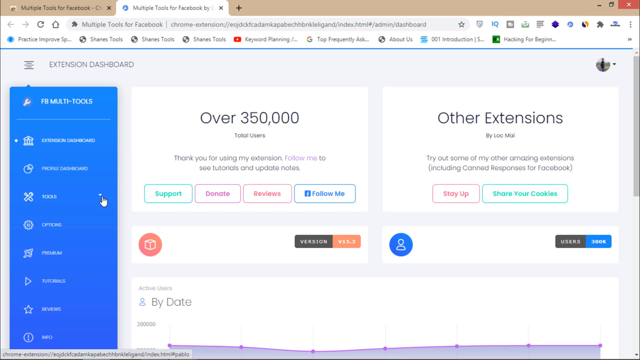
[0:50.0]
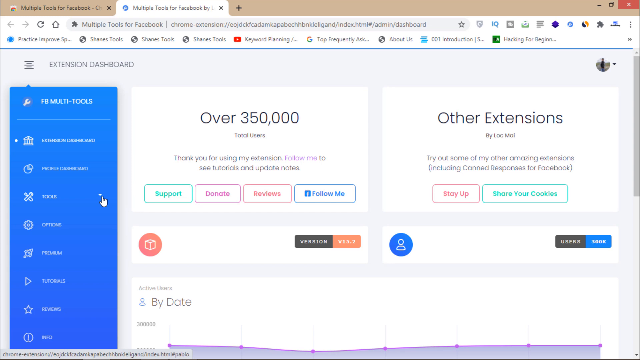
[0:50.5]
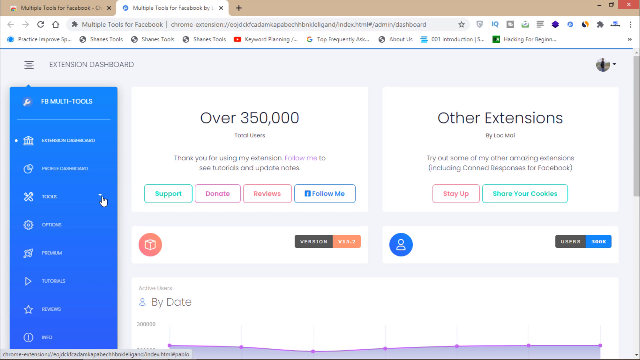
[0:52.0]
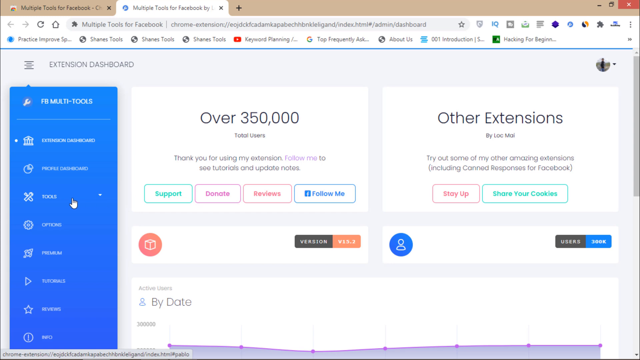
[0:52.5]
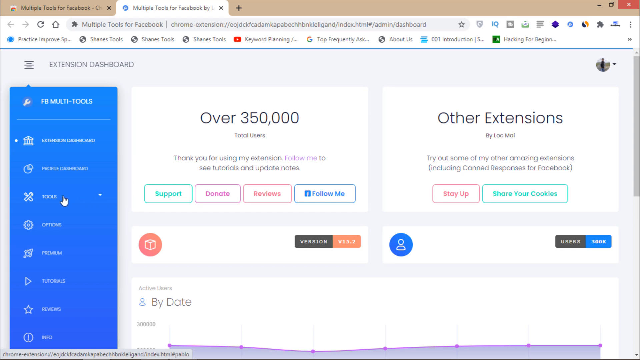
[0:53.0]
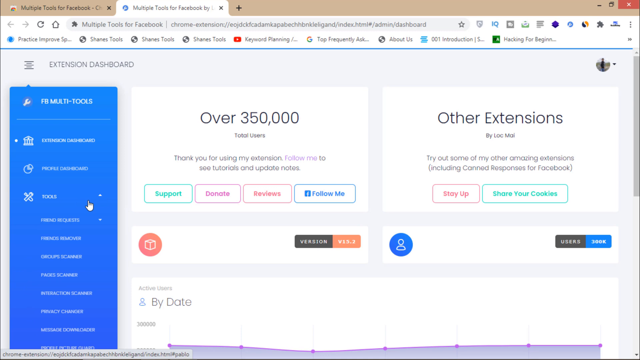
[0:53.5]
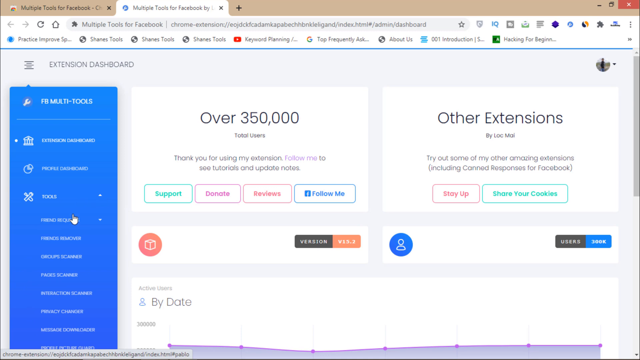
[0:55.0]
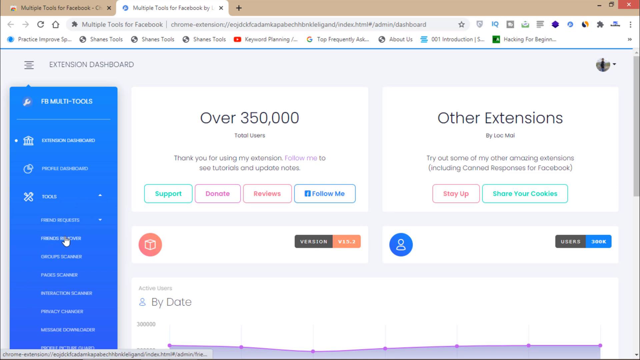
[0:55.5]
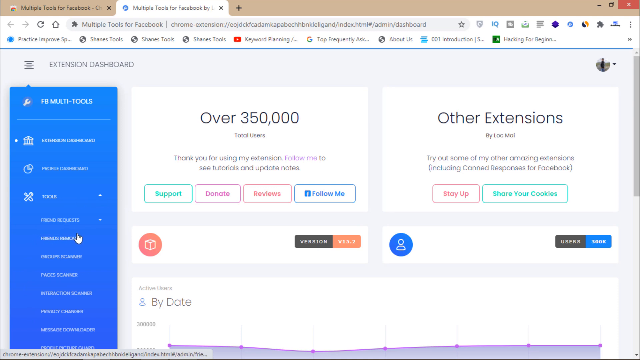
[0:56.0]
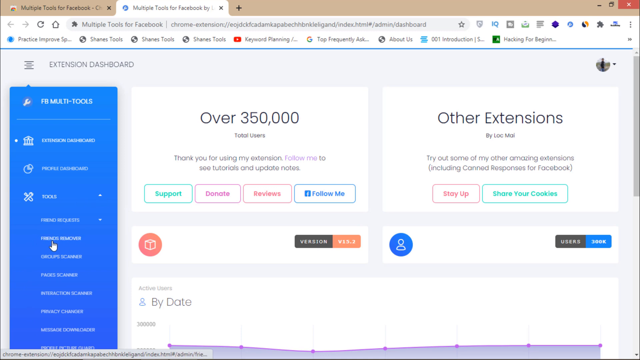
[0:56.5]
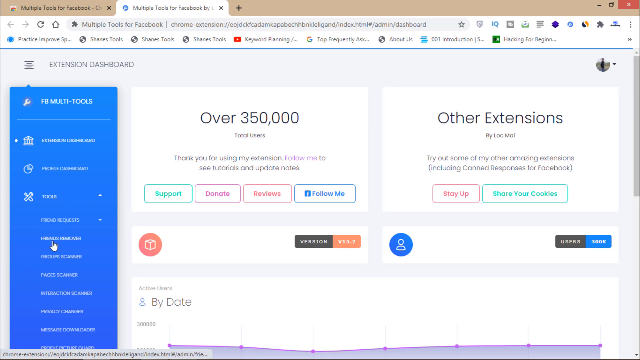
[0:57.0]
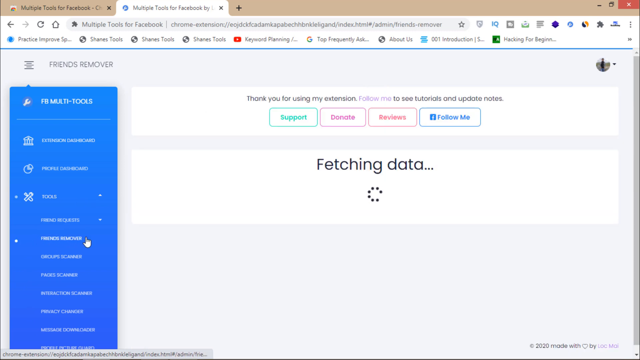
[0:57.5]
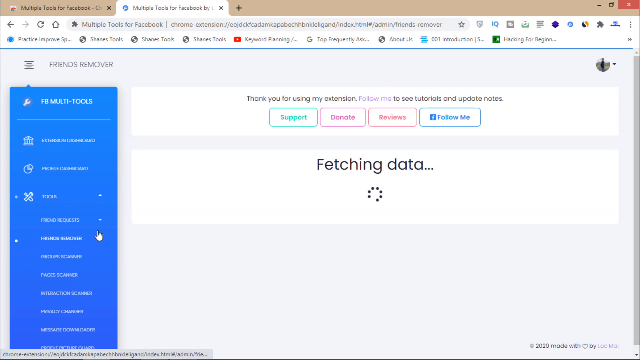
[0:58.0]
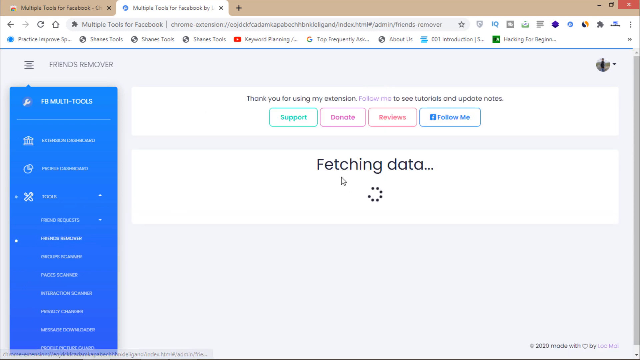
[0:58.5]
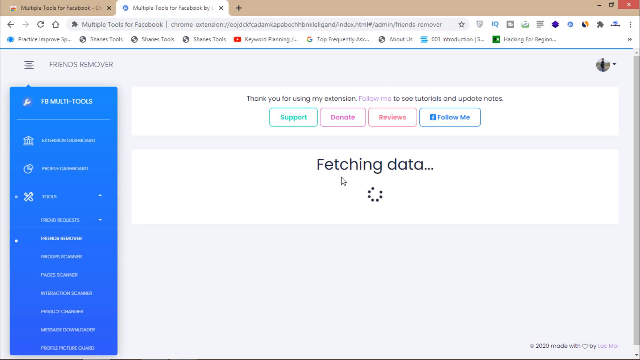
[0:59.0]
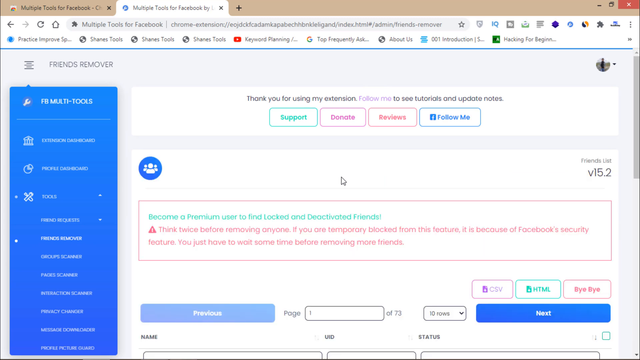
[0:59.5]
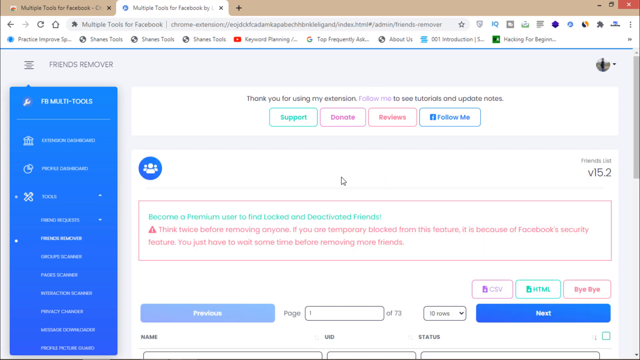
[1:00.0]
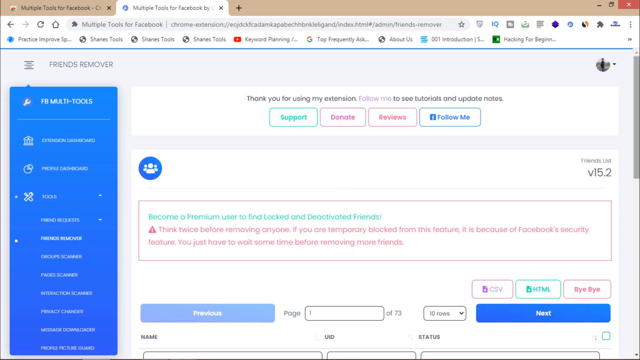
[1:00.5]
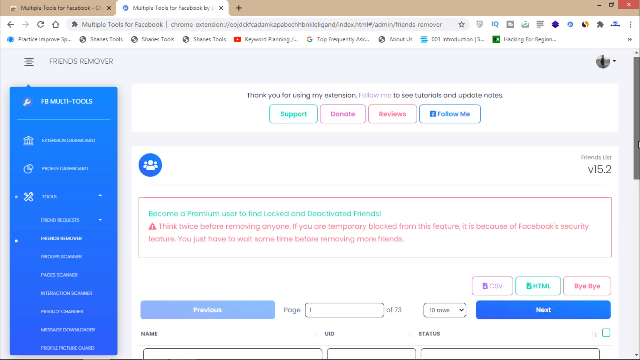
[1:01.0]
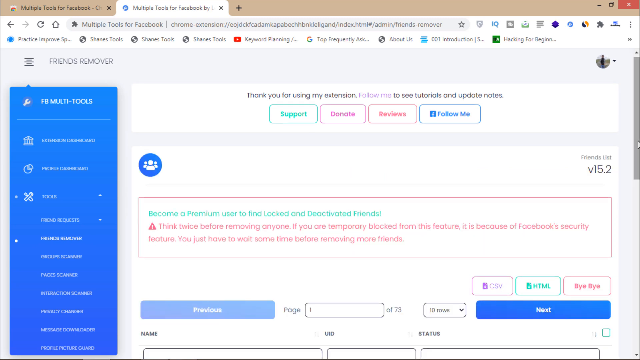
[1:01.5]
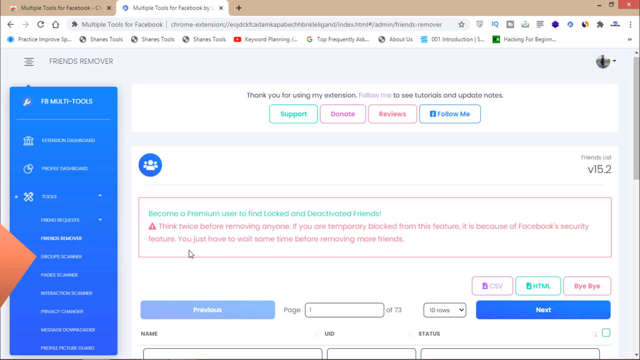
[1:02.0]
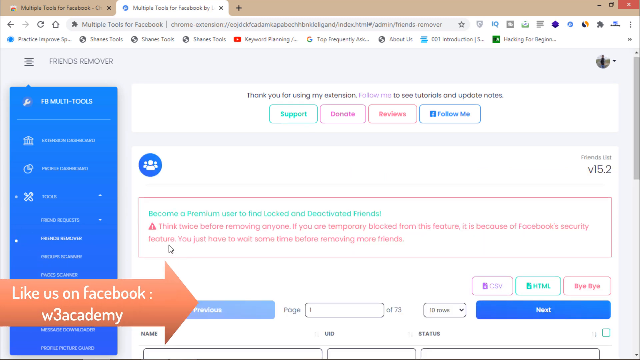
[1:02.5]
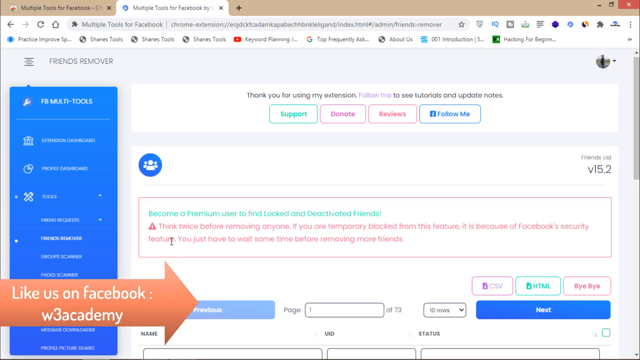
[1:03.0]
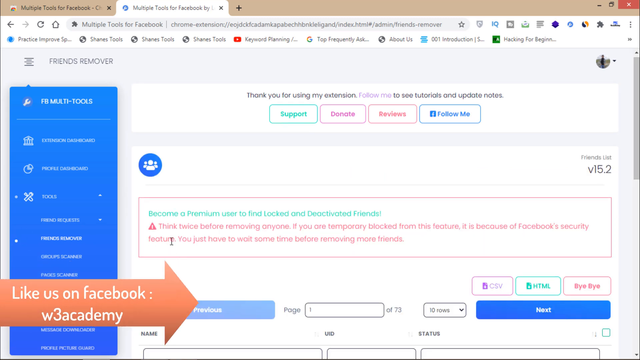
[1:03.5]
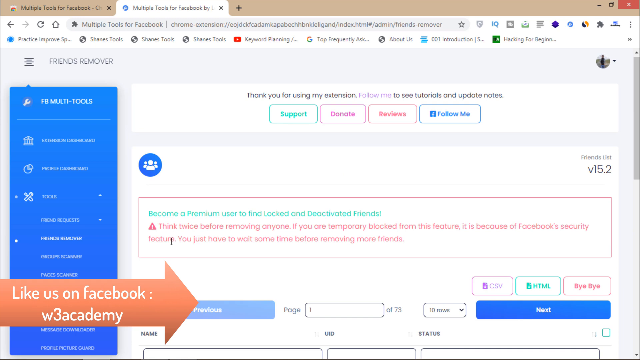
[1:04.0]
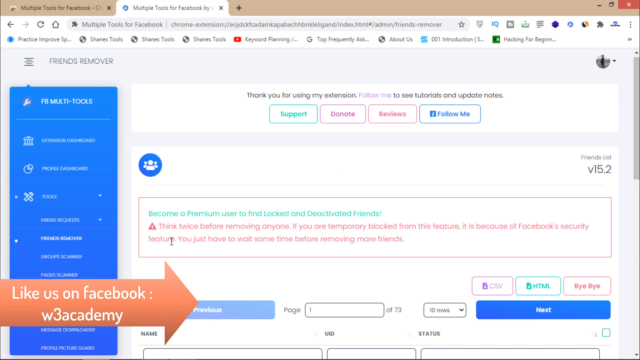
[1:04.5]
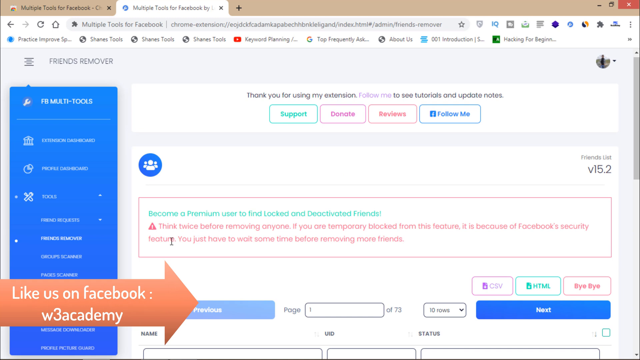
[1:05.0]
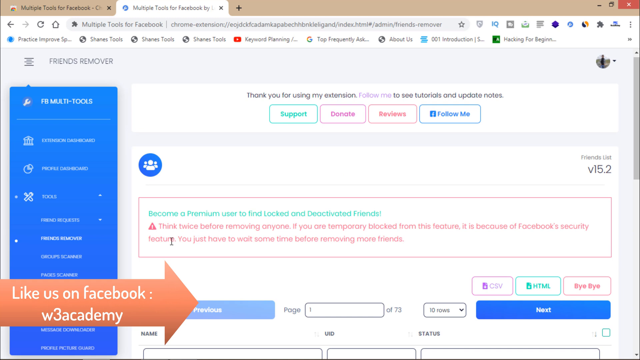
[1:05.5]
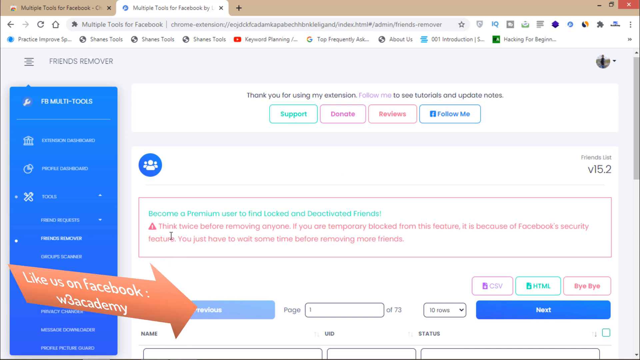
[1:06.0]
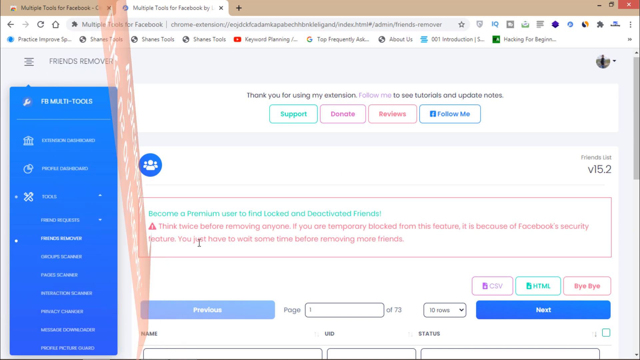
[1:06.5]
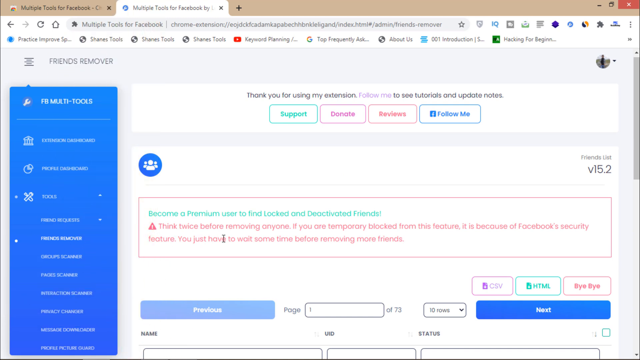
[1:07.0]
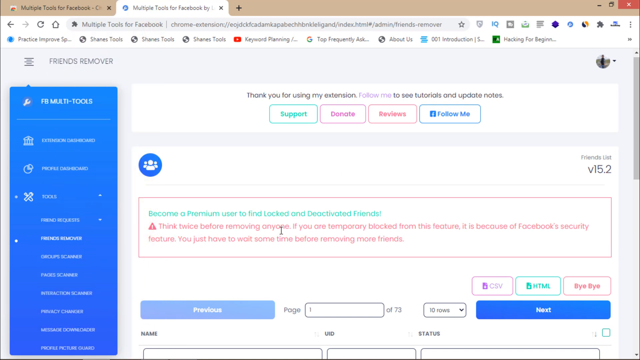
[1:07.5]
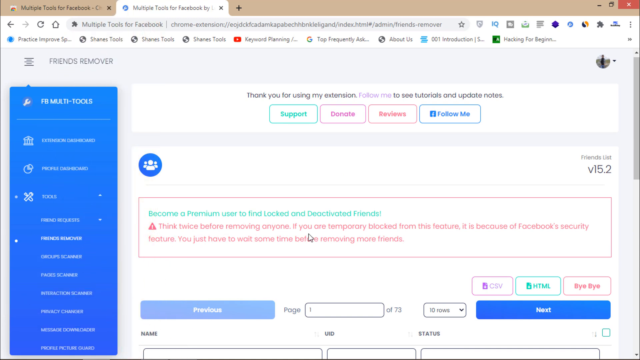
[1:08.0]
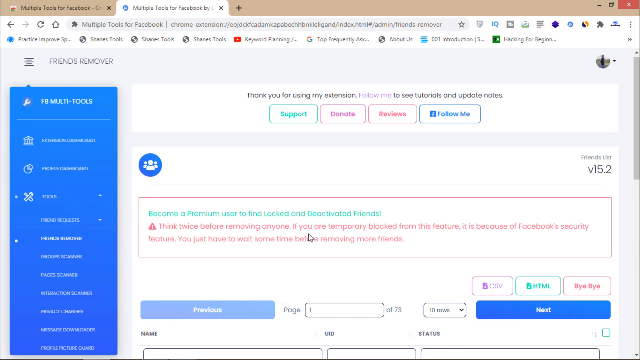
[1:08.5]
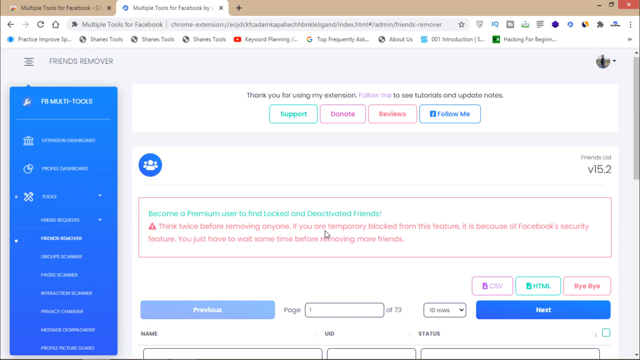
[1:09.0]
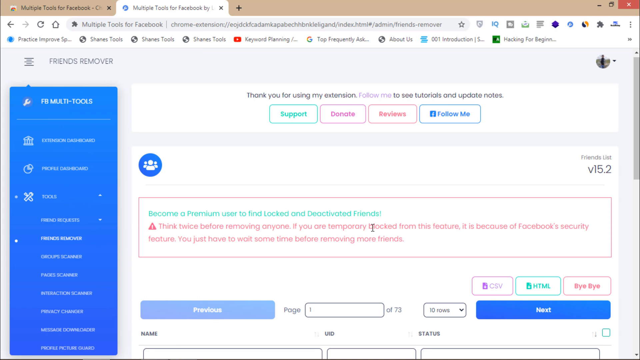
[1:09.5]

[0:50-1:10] The multiple tools for Facebook extension dashboard shows "over 350,000 total users" and "support, donate, reviews, follow me, other extensions," plus "stay up, share your cookies." The user clicks the tools tab and then clicks on fetching data, and data is fetched. Text reads "become a premium user to find locked and deactivated friends. Think twice before removing anyone if you are temporarily blocked from this feature. This is because Facebook's security feature. You just have to wait some time before removing more friends." The user is possibly trying to remove friends from Facebook with the extension.